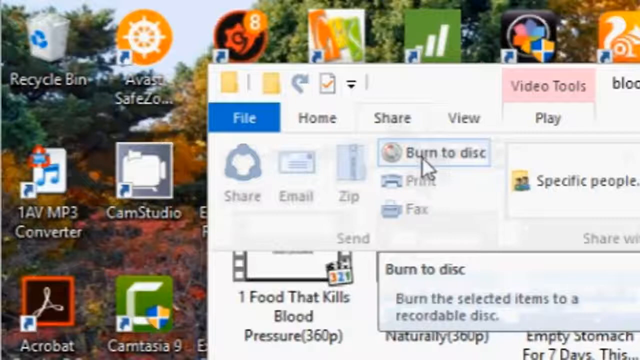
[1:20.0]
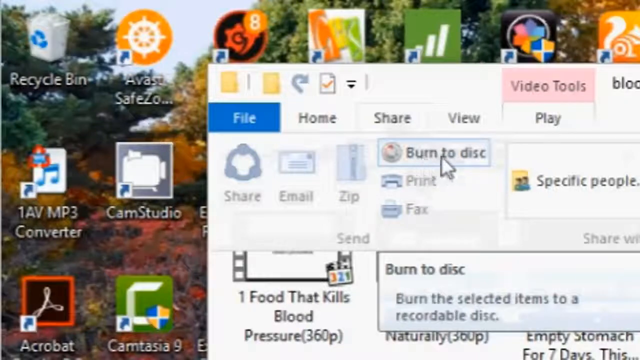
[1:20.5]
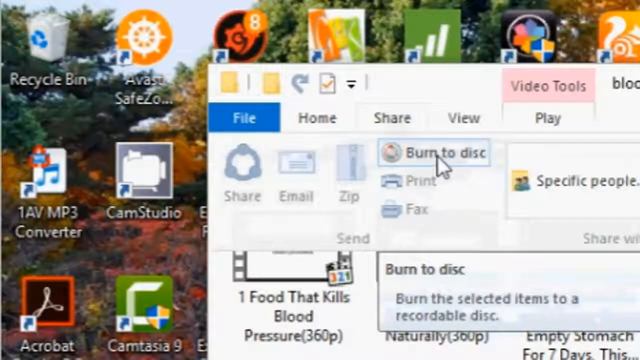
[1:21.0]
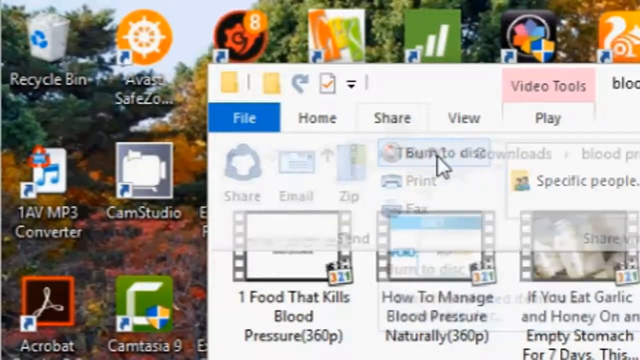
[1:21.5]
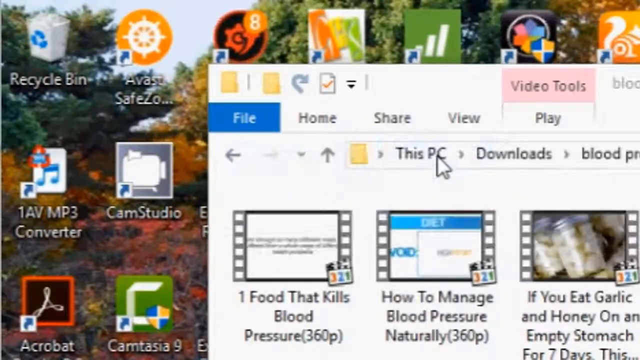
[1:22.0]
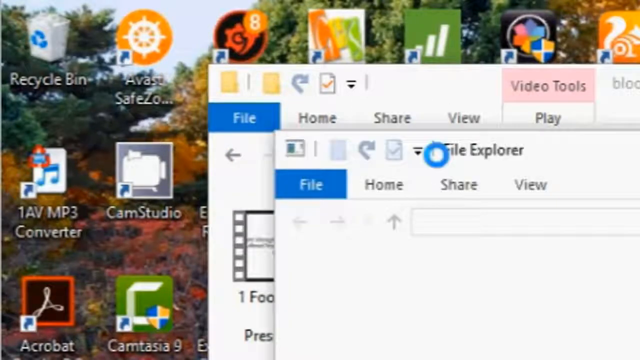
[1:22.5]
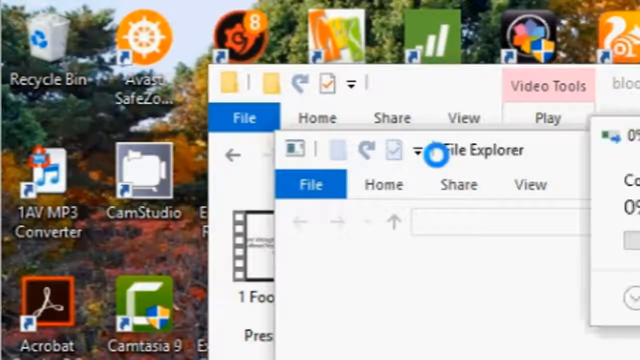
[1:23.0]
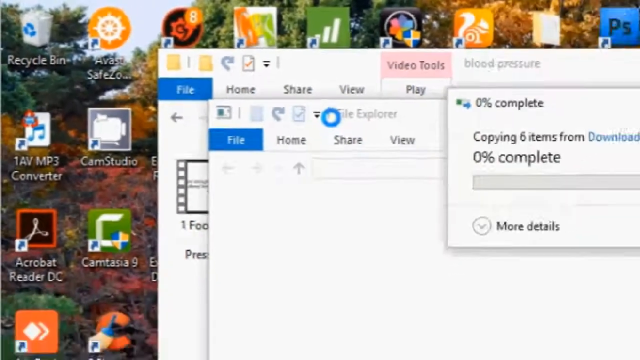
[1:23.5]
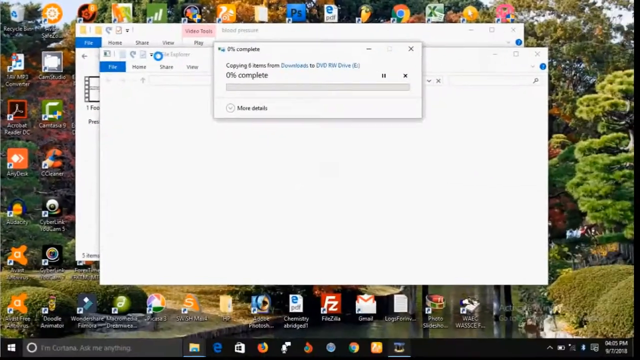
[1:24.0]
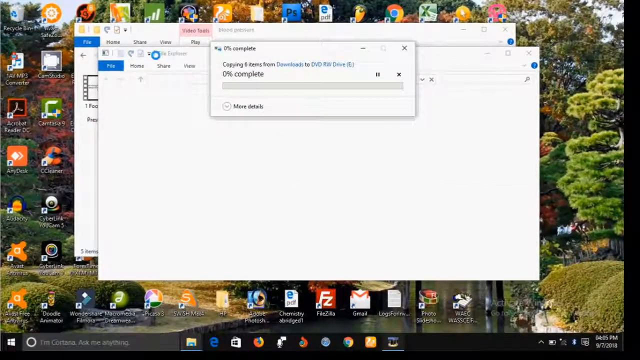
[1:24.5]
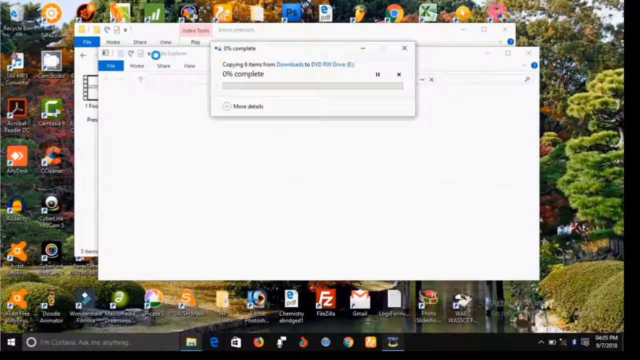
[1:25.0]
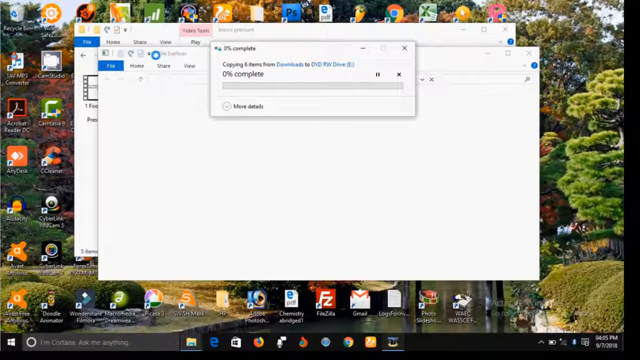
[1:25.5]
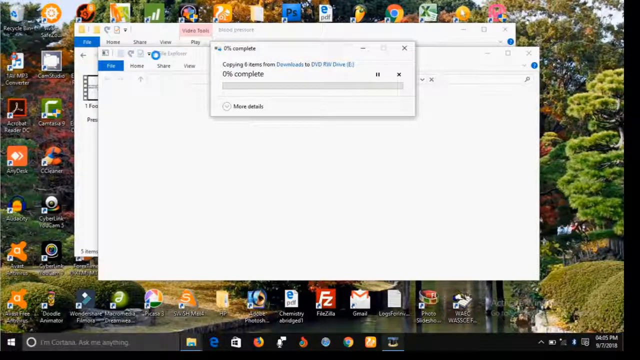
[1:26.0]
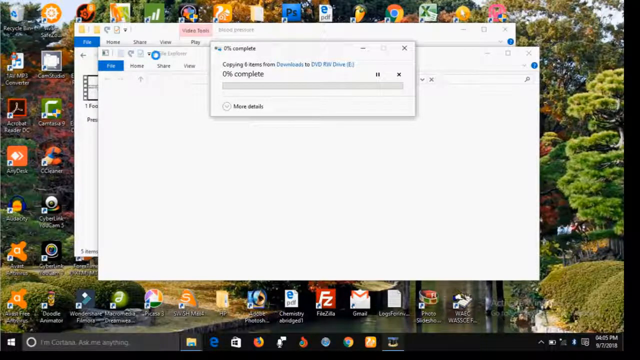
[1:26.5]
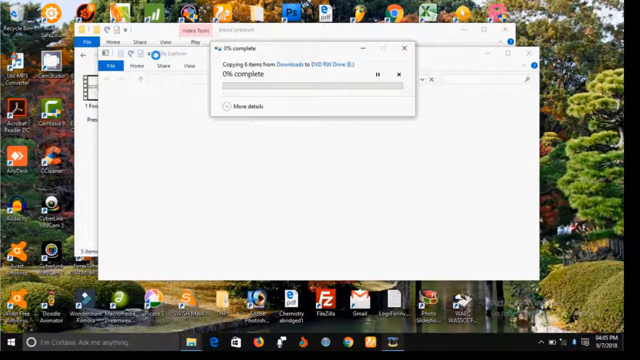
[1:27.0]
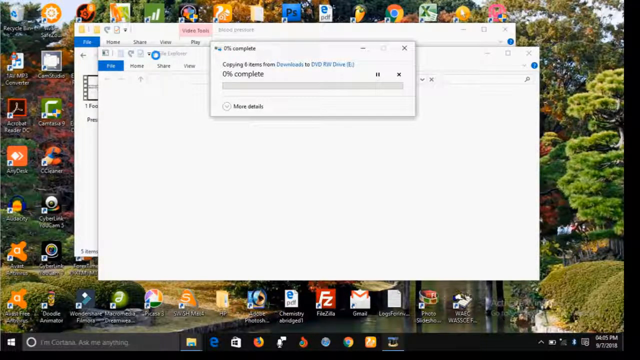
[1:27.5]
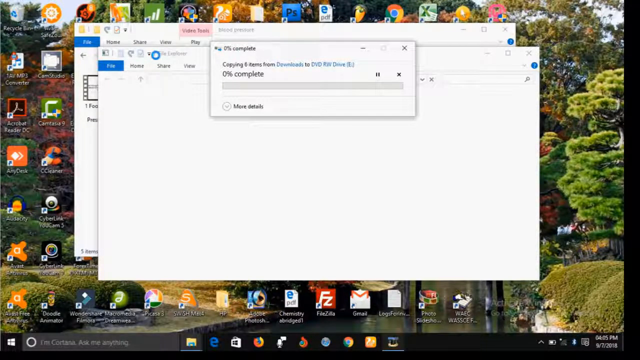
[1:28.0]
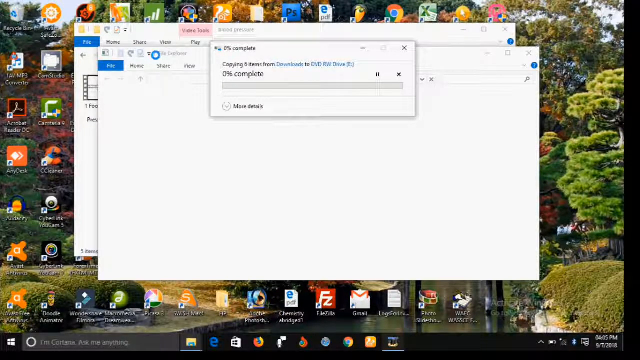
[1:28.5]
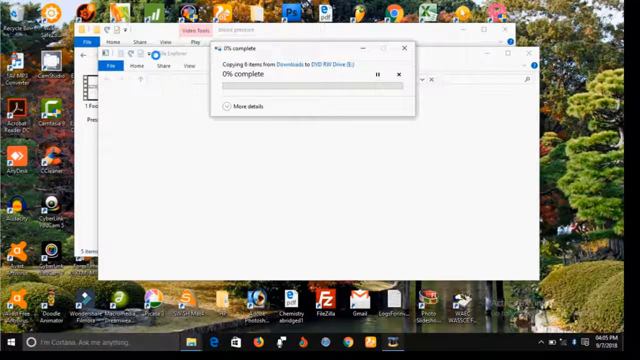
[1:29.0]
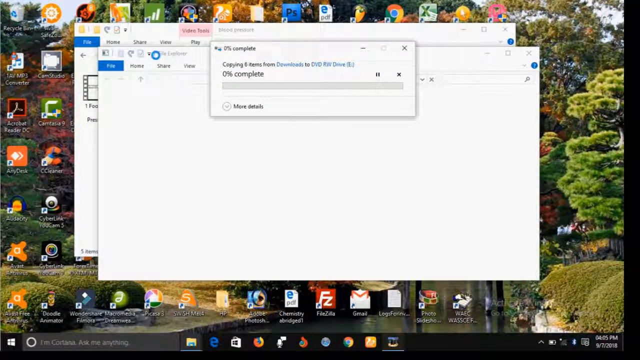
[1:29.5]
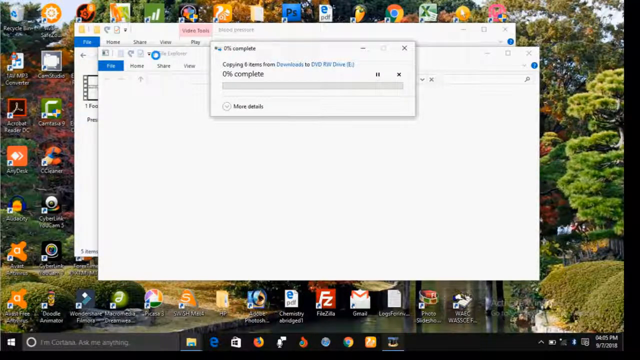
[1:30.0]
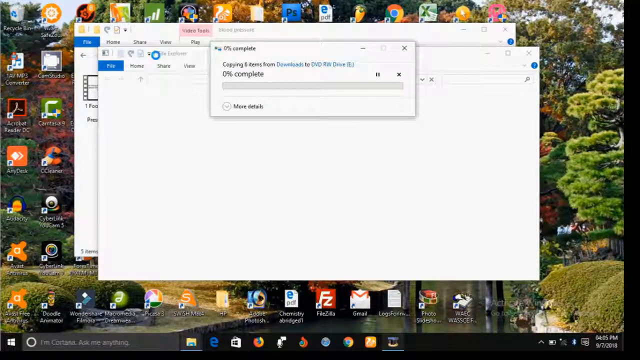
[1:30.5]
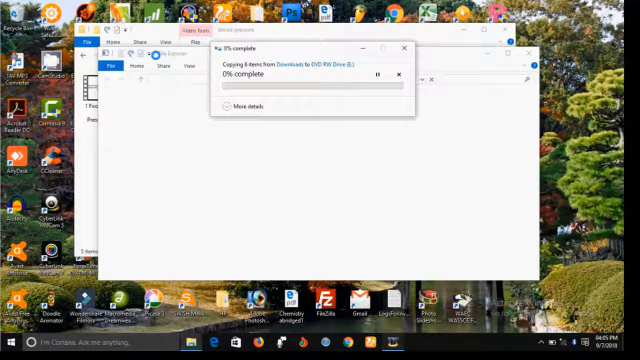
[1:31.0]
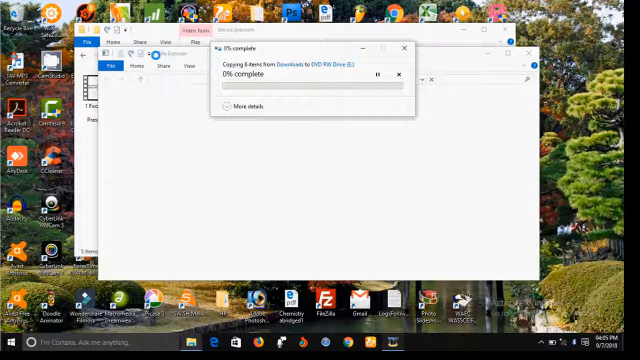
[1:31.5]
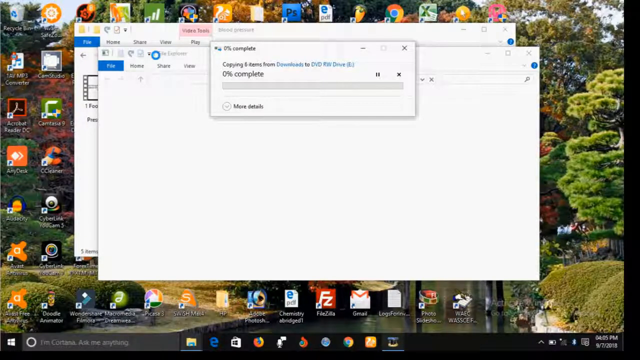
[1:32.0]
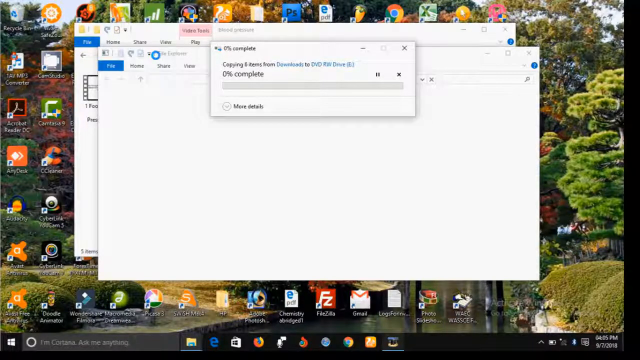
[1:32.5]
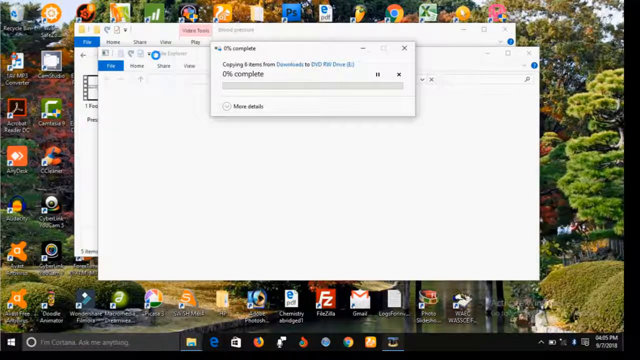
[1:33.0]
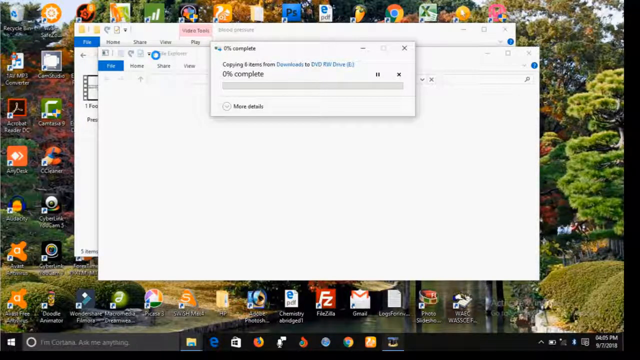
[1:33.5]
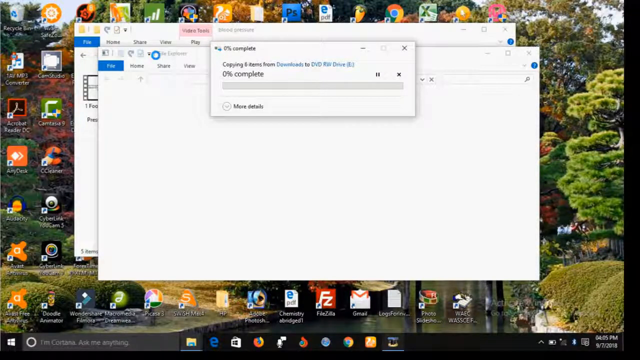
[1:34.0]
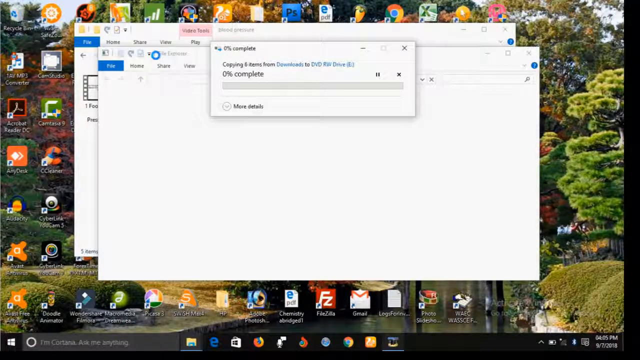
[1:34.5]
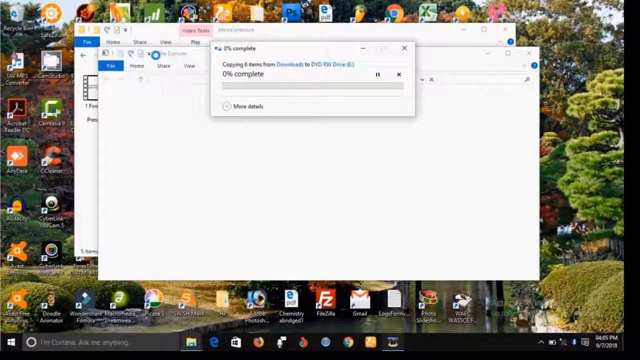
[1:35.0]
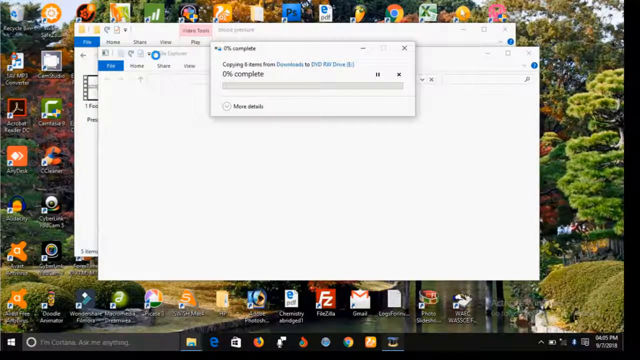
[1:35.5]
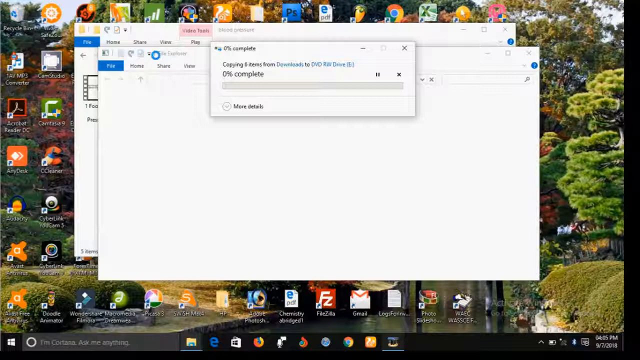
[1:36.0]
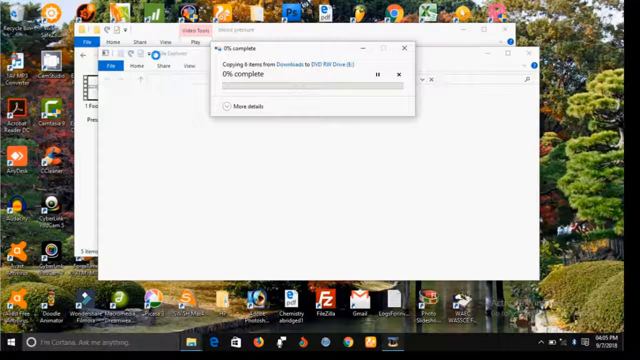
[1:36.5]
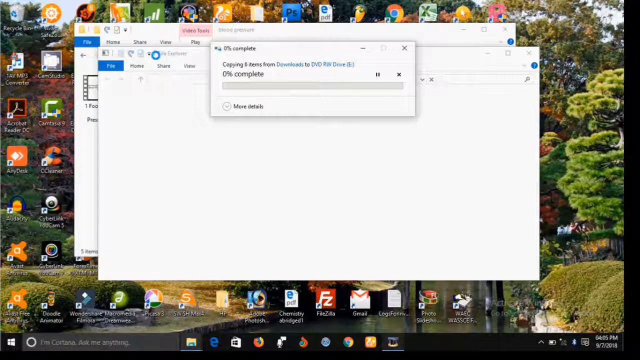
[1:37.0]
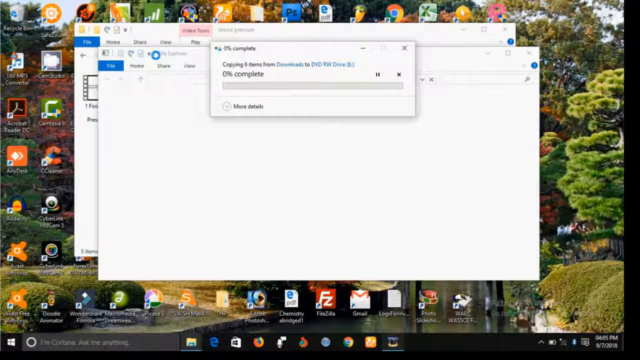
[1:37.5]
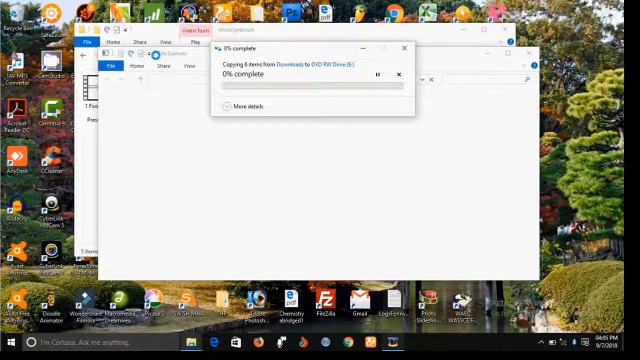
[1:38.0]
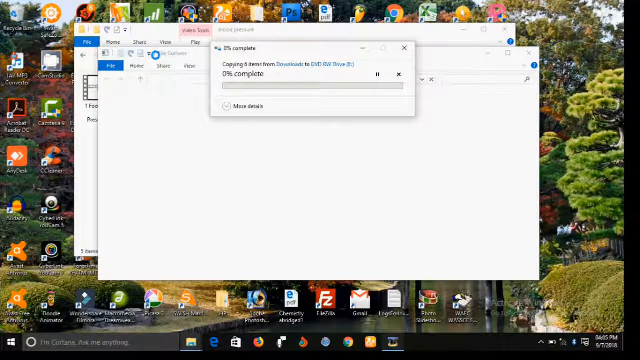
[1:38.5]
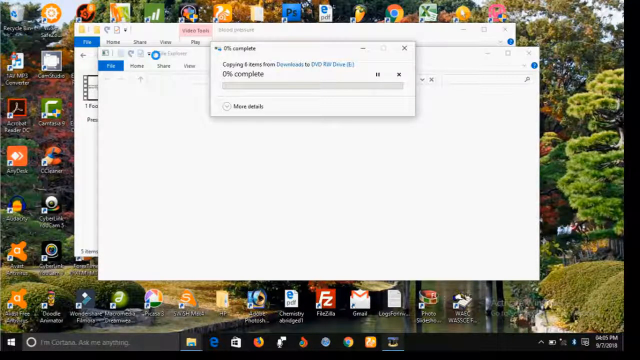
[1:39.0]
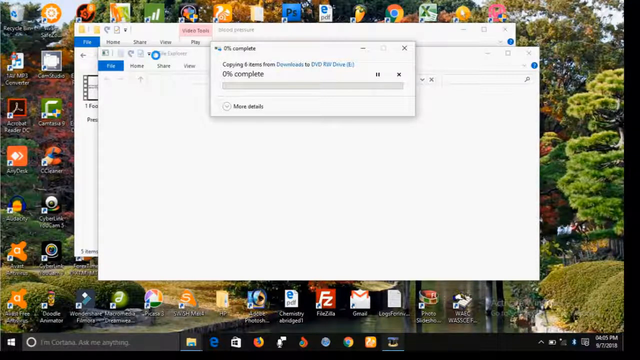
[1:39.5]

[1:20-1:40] As the user hovers over the Burn to disk option, a hint appears reading "burn the selected item to a recordable disk". The user clicks Burn to disk, and a progress bar appears, starting at "0% complete" with the text "copying items from blood pressure to DVD drive", waiting to load as the files are burned to the disk. There is a more details button to show the full view of the progress. Three File Explorer windows are open: one for the file directory, one showing the burn to disk section, and one showing the progress of the files being burned to the disk. A loading icon, a blue circle, overlaps the mouse cursor while the file loads.